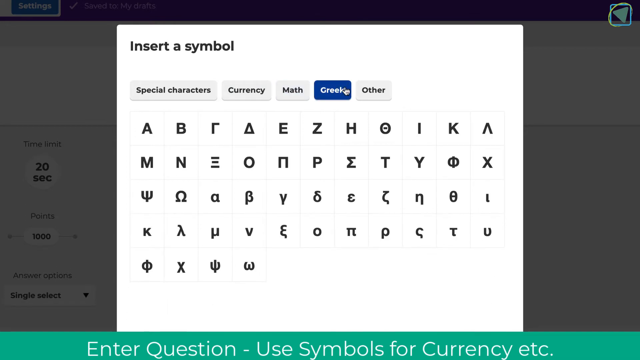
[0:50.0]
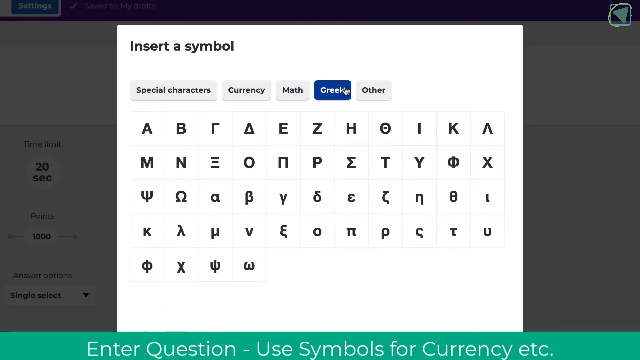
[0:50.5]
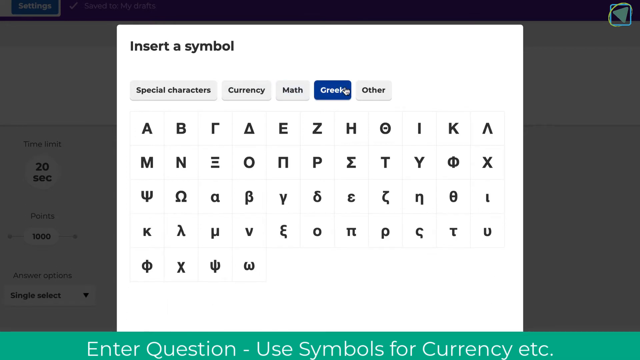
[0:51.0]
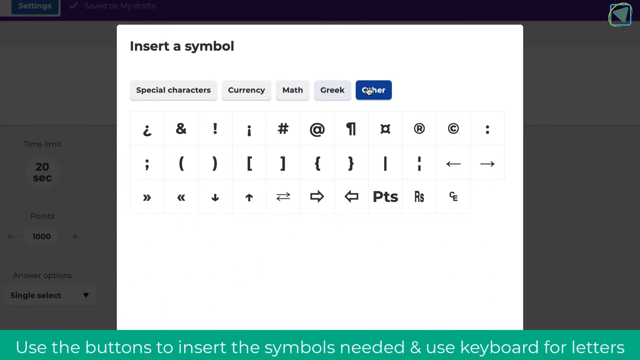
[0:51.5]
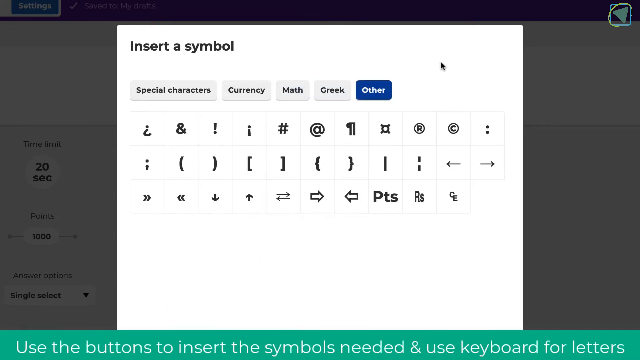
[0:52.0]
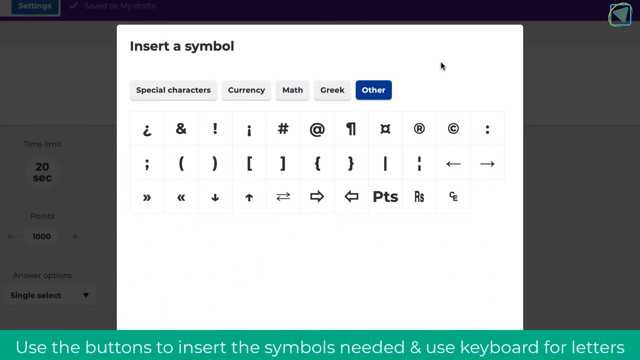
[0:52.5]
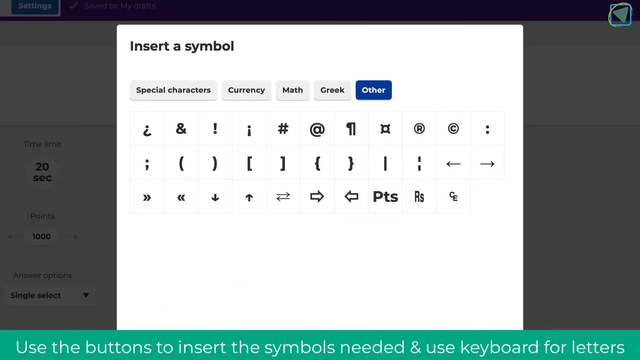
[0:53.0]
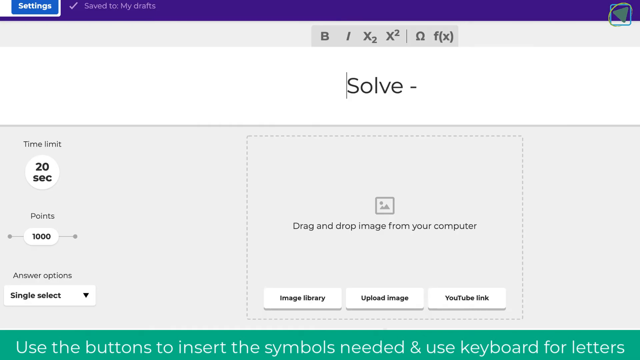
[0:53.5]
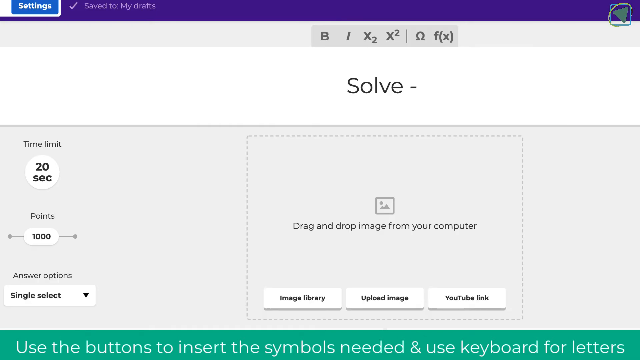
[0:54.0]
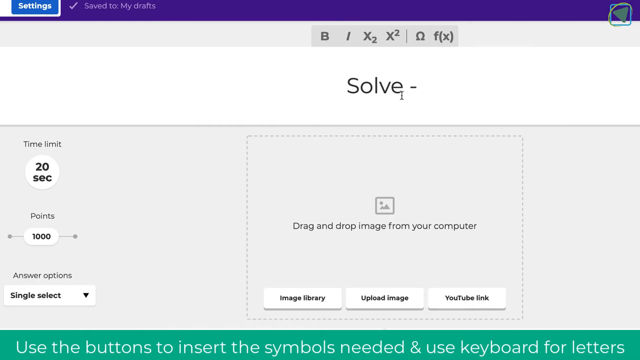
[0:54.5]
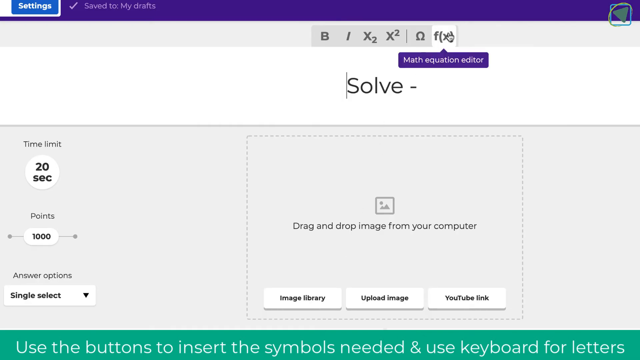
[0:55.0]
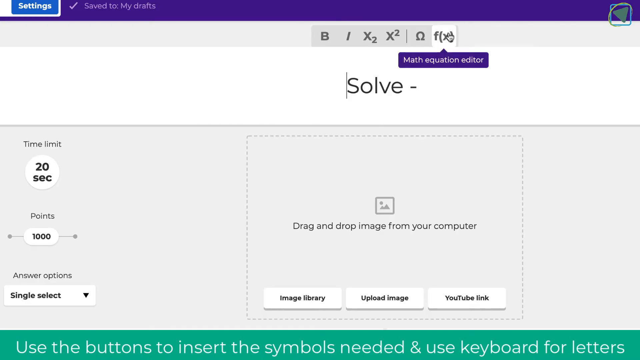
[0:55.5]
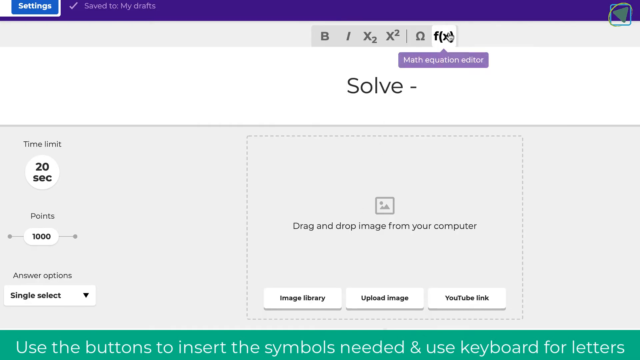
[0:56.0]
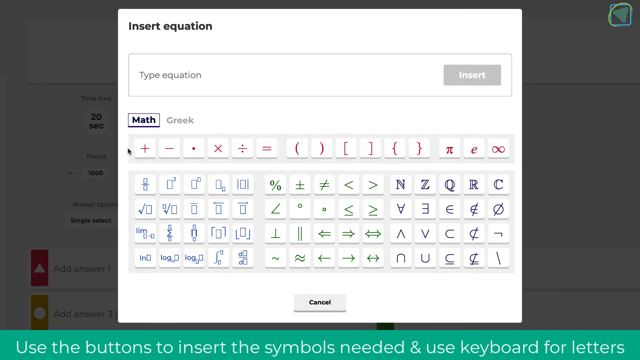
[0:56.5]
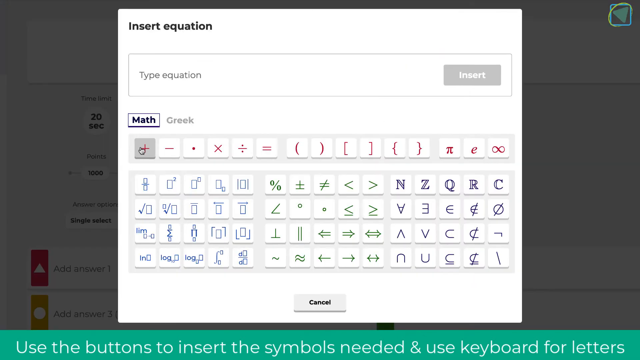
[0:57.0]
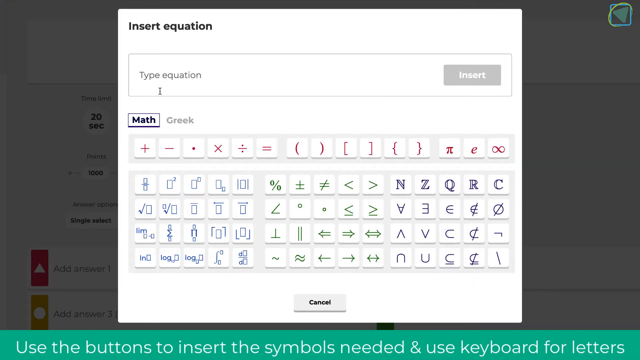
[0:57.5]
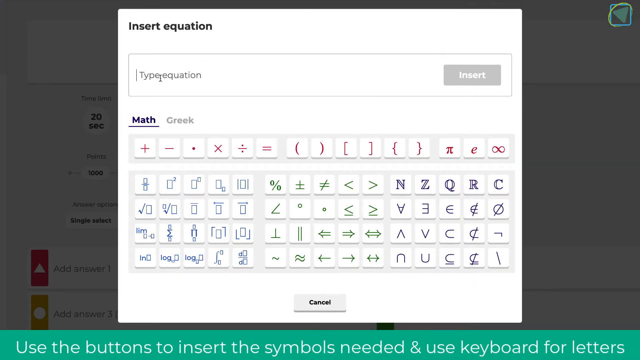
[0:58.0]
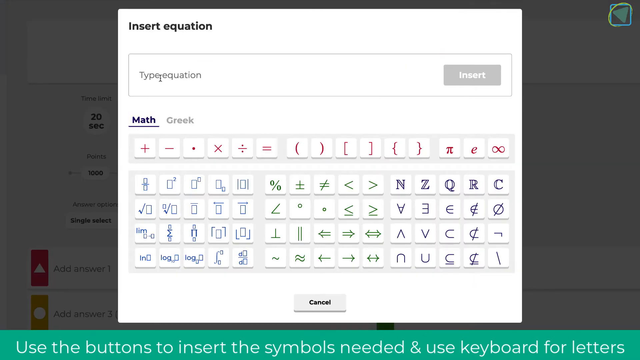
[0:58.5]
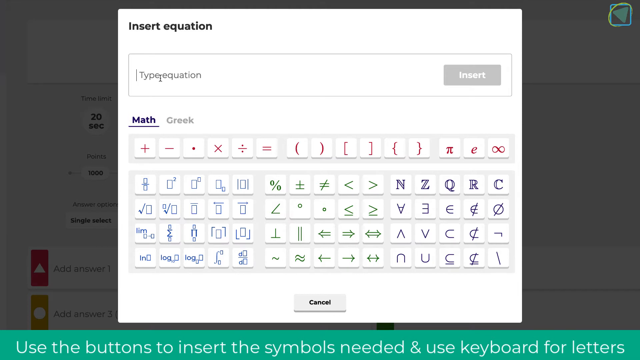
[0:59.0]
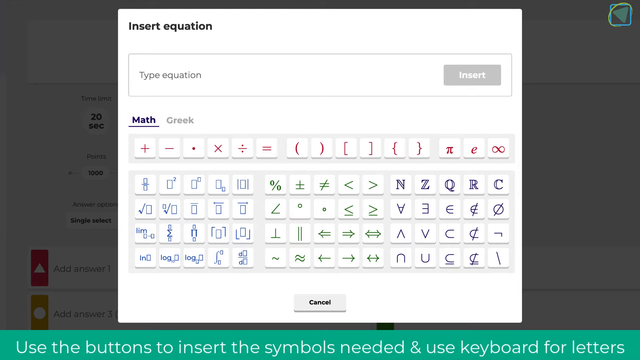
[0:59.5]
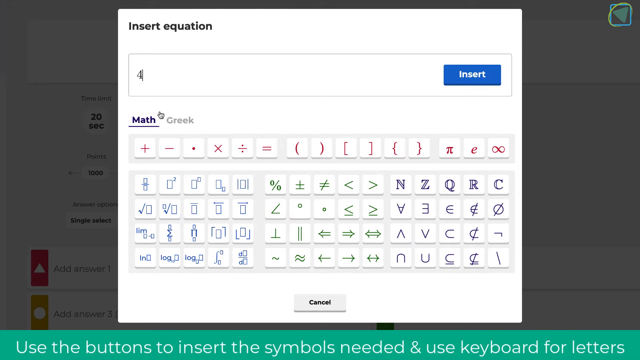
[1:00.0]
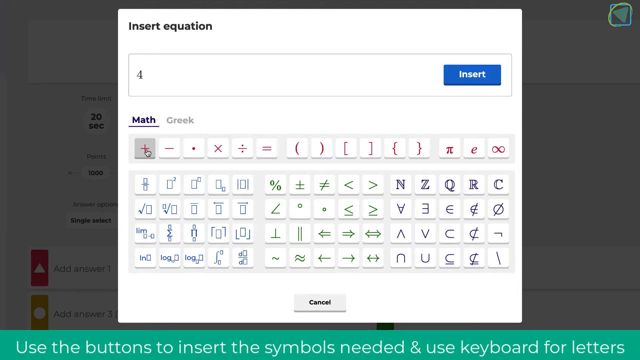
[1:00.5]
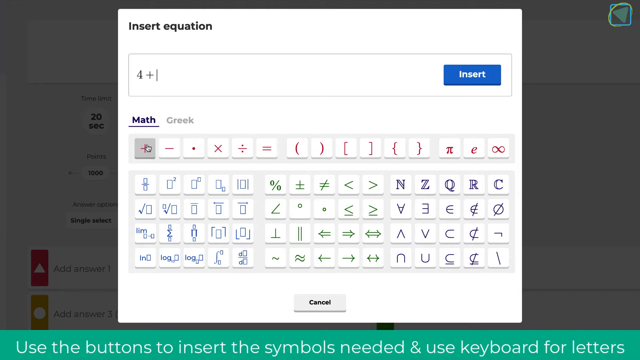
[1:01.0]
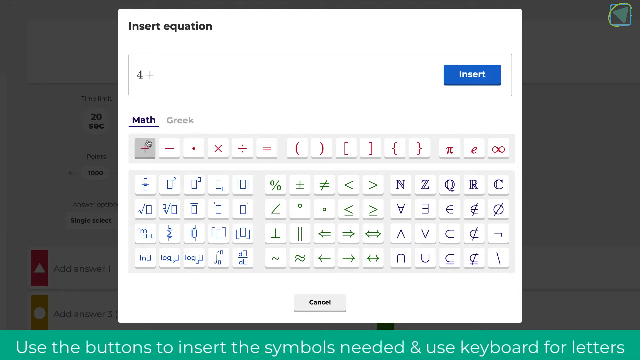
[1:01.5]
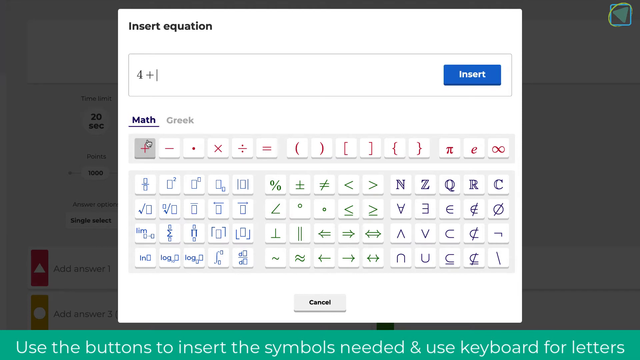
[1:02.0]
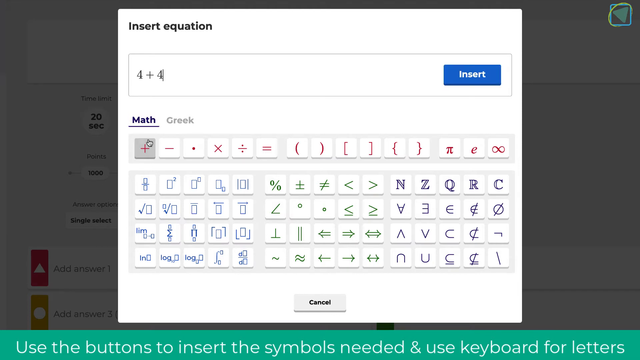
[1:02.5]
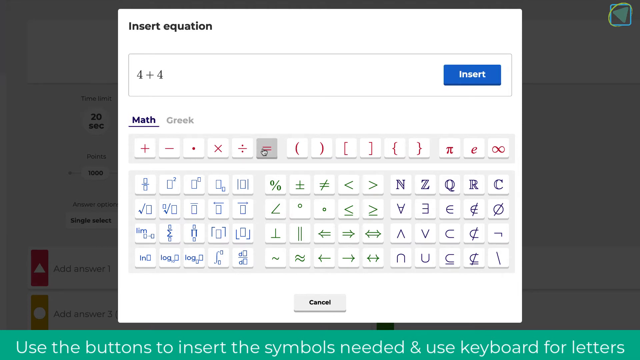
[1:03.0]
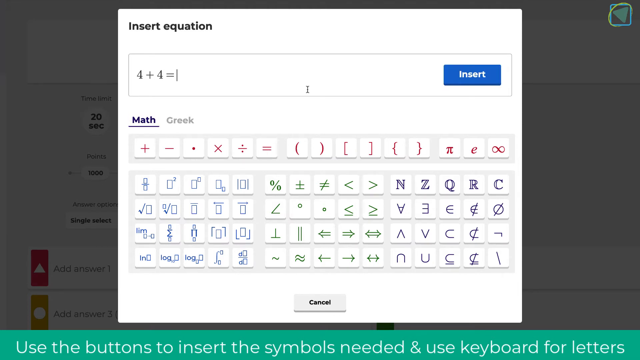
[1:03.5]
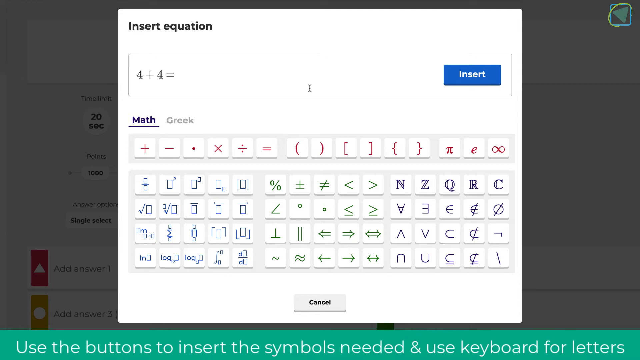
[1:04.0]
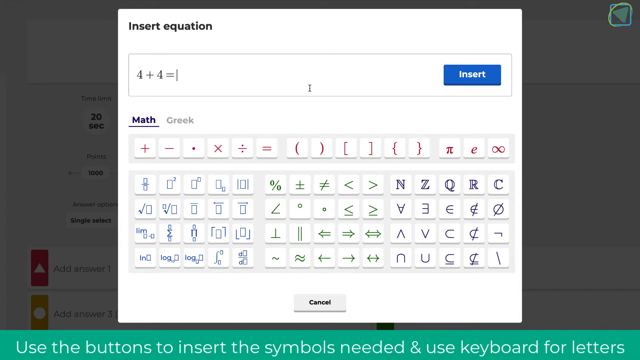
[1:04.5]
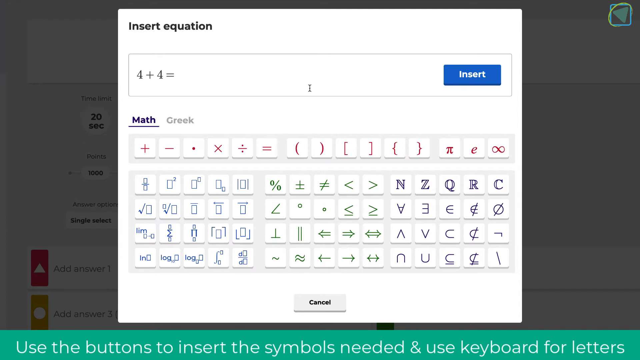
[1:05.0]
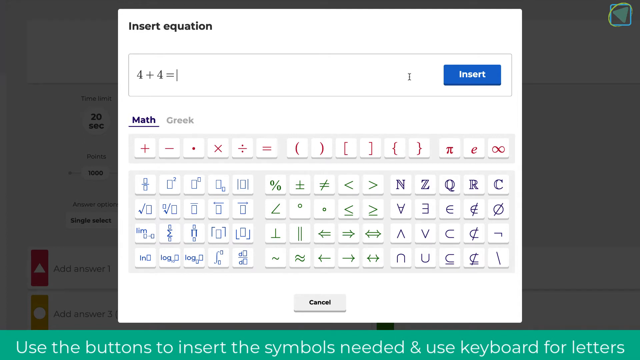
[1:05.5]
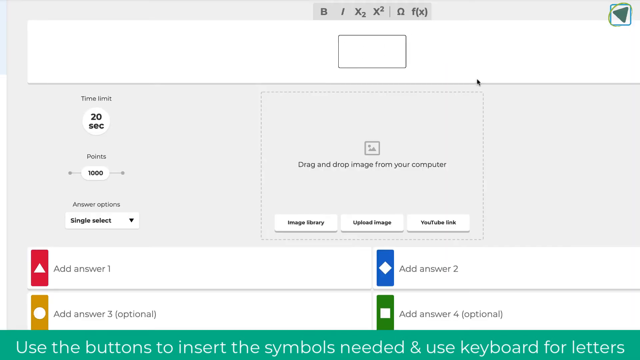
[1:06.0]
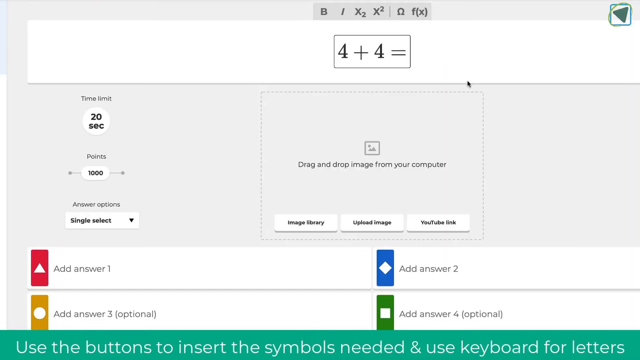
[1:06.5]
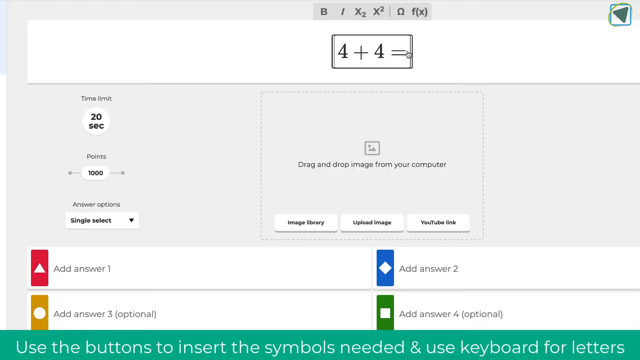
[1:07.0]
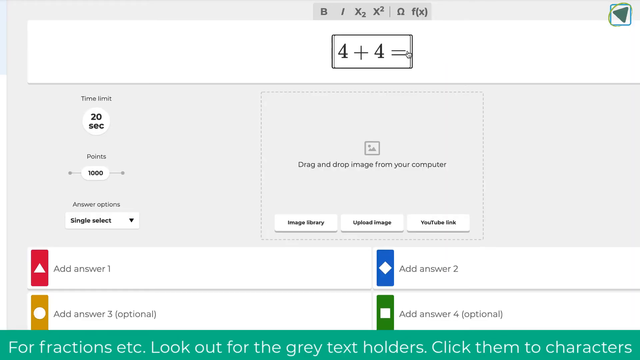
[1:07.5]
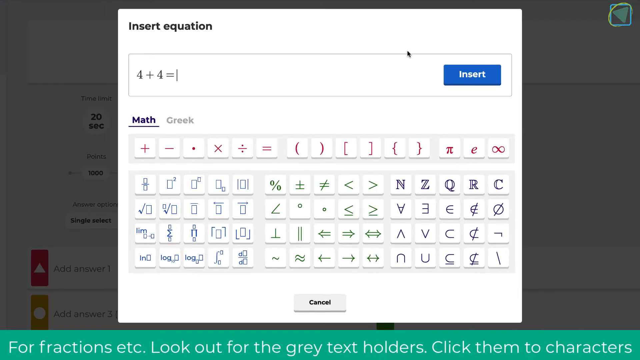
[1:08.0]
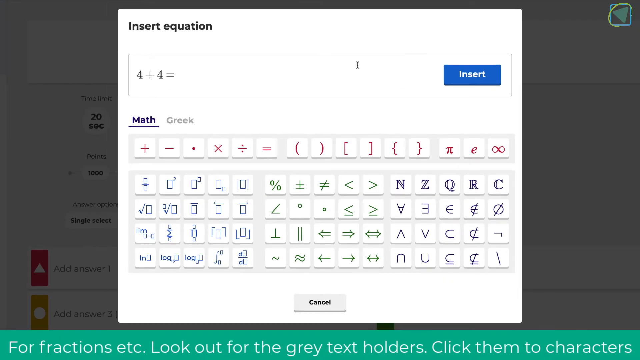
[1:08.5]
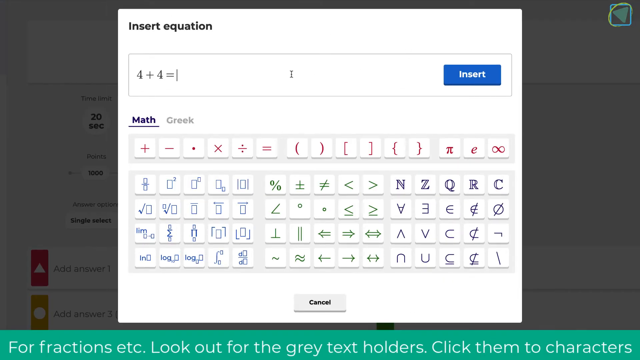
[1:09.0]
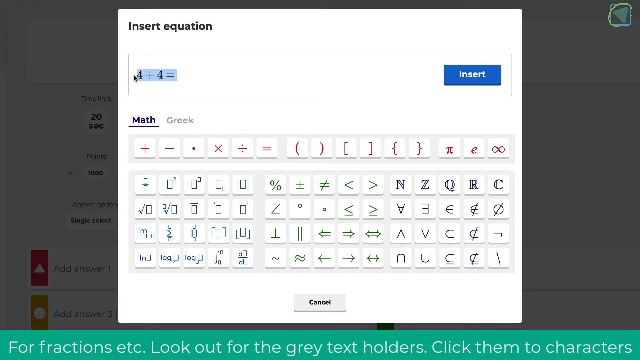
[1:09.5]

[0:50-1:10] The special characters window is open with Greek selected; the word "Greek" is highlighted in blue, and just below it is a set of tiles with Greek letters such as alpha, beta, gamma, delta, epsilon and zeta. The user moves over to the other menu, which has a relatively small list of abbreviation marks such as an upside-down question mark and the ampersand. He does not select one and clicks off. He then moves up to the last option in the top menu, the math equation editor, whose icon is an f with an x in parentheses. Clicking it opens what looks like a calculator without numbers, with a section that says "type equation" and many clickable symbols below it. He types the number four, moves his cursor down to the plus or summation sign and inserts it, types another four, and then an equals sign. He moves his cursor up and clicks the blue insert button, which inserts the equation "4 + 4 =", replacing the word "Solve". He then opens the math equation editor again and highlights the 4 + 4.